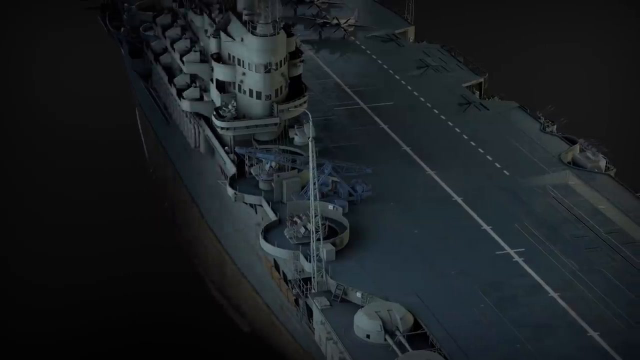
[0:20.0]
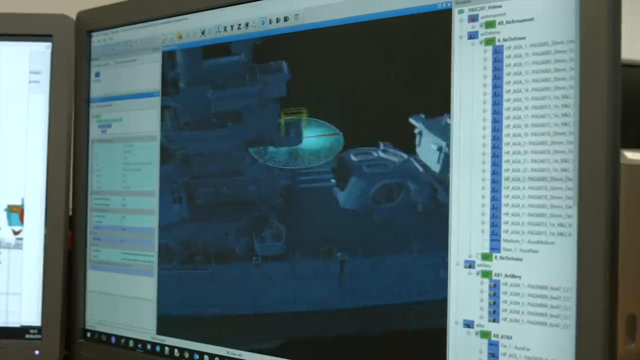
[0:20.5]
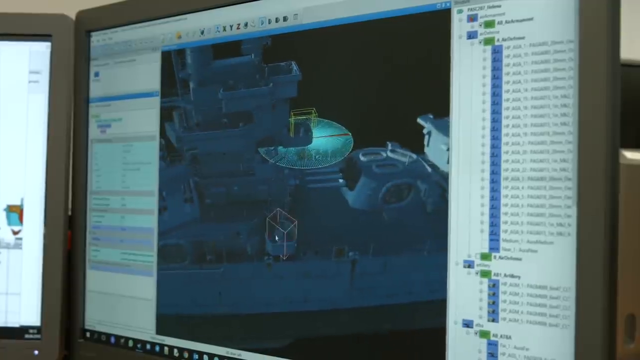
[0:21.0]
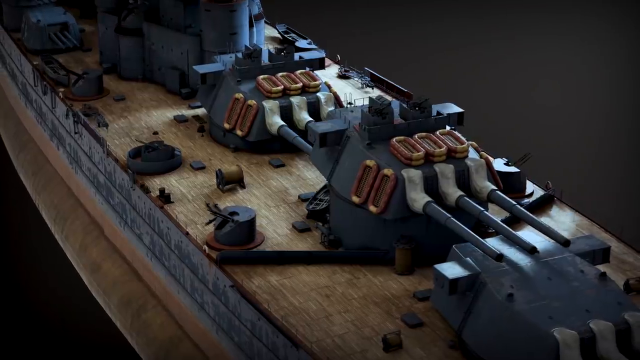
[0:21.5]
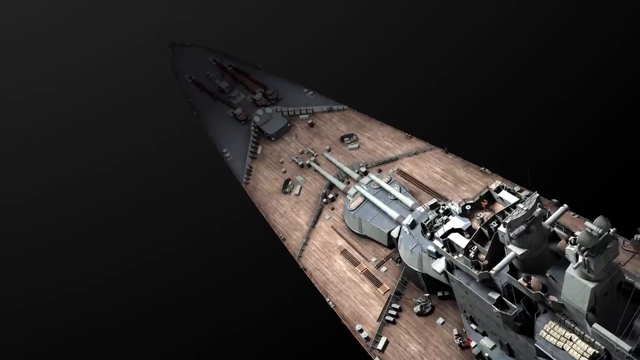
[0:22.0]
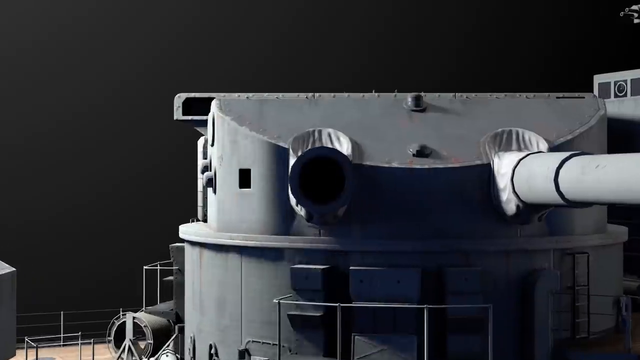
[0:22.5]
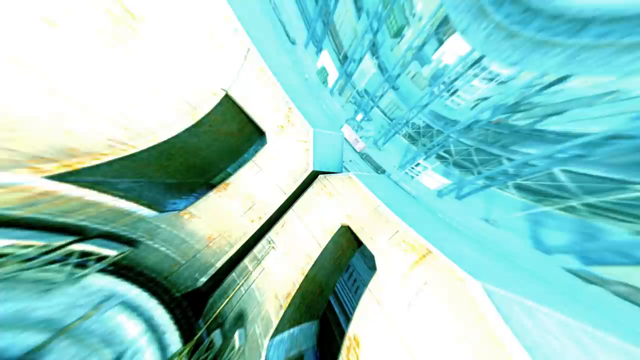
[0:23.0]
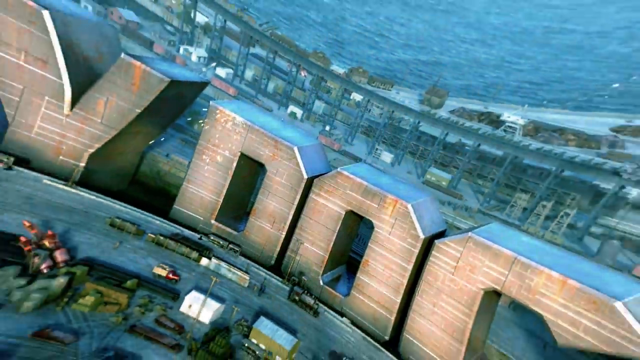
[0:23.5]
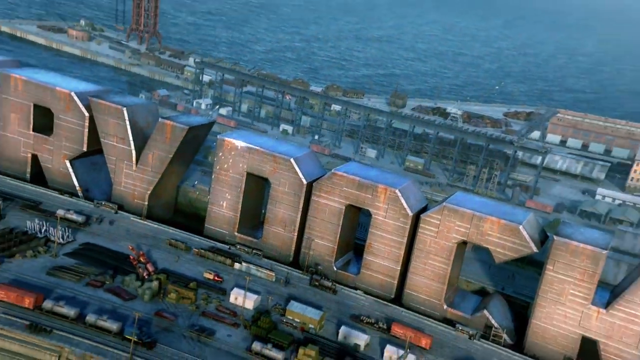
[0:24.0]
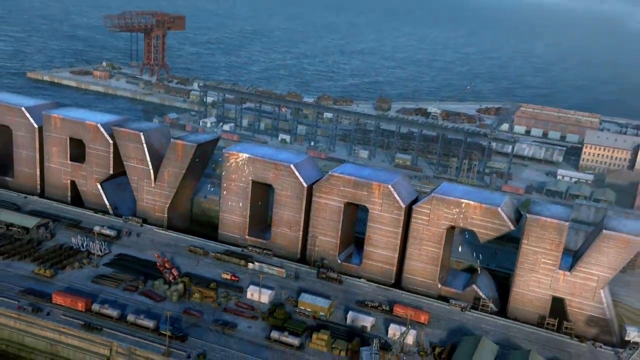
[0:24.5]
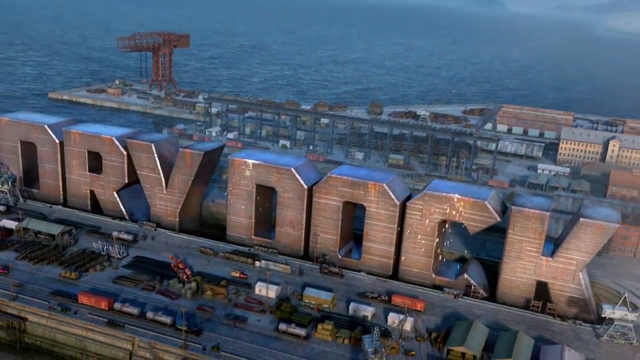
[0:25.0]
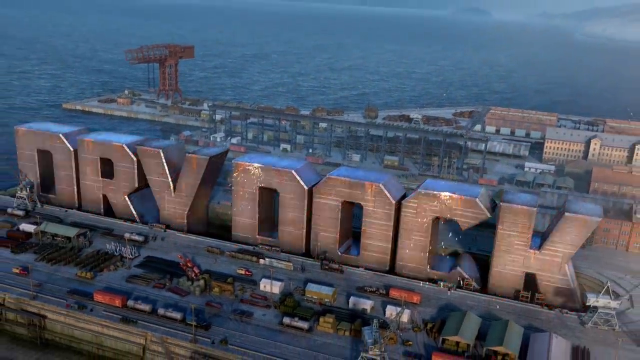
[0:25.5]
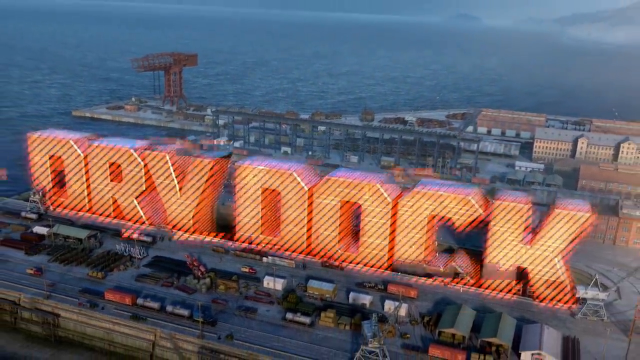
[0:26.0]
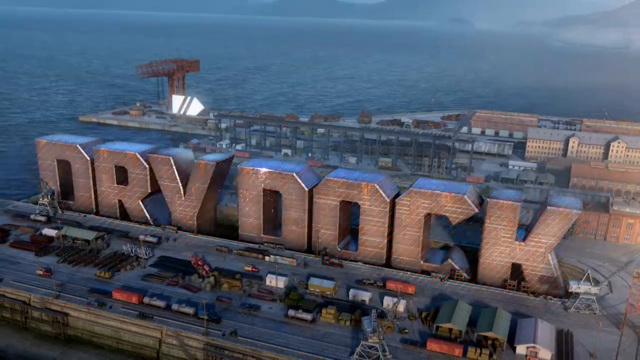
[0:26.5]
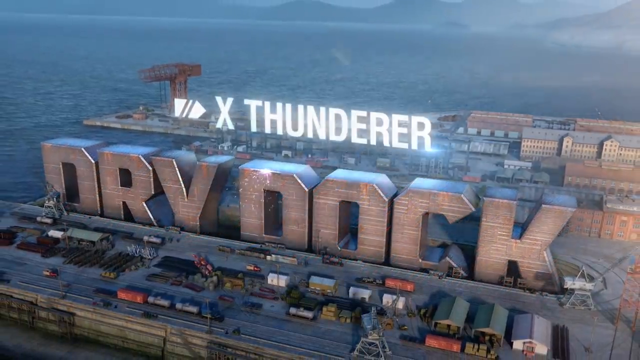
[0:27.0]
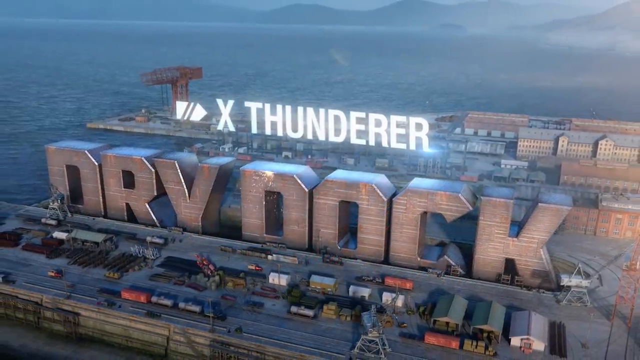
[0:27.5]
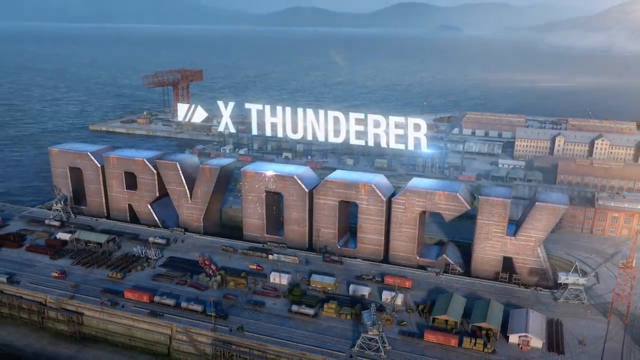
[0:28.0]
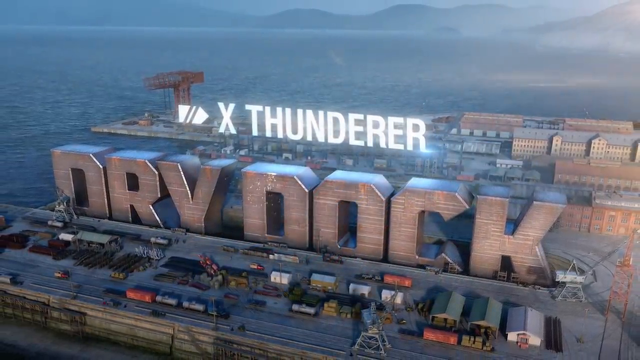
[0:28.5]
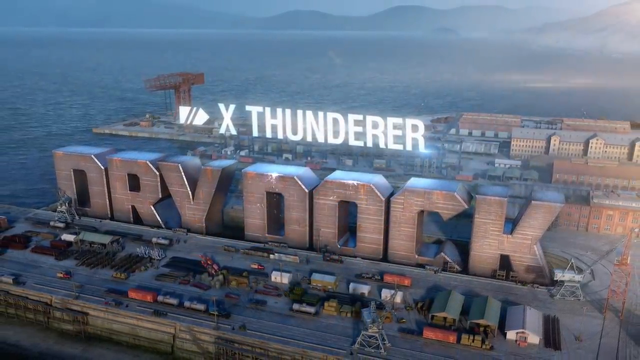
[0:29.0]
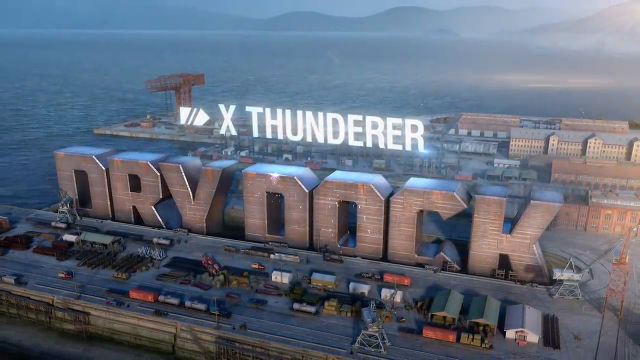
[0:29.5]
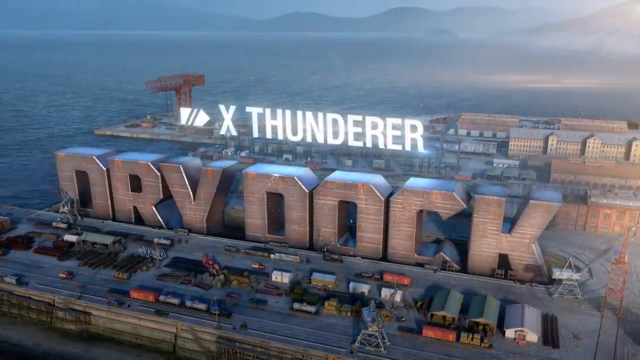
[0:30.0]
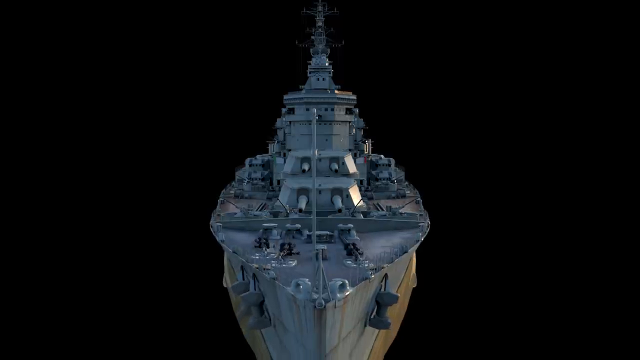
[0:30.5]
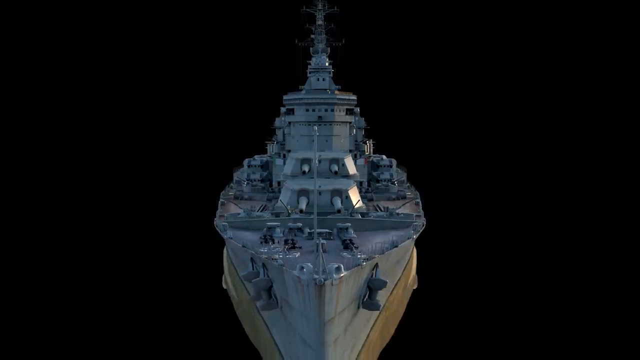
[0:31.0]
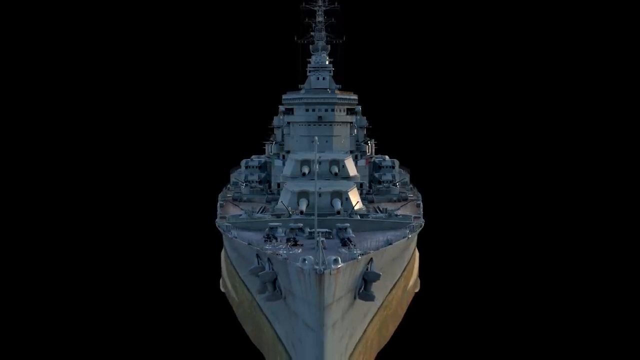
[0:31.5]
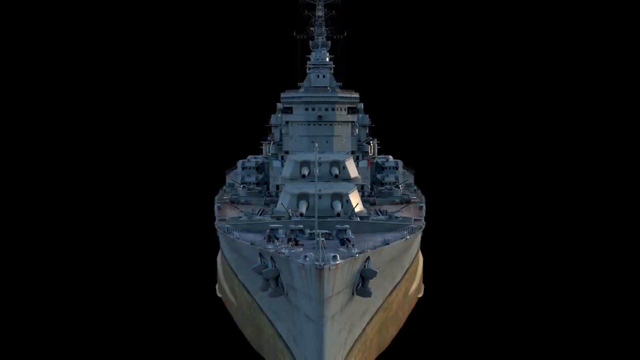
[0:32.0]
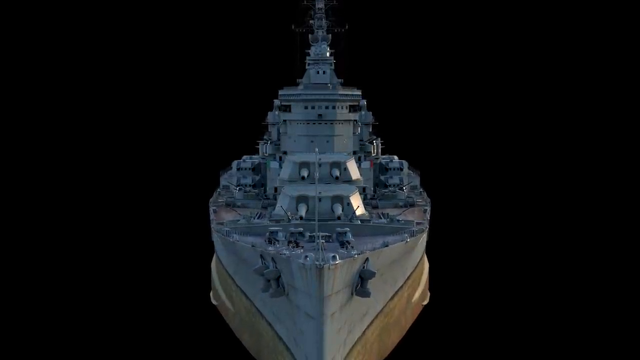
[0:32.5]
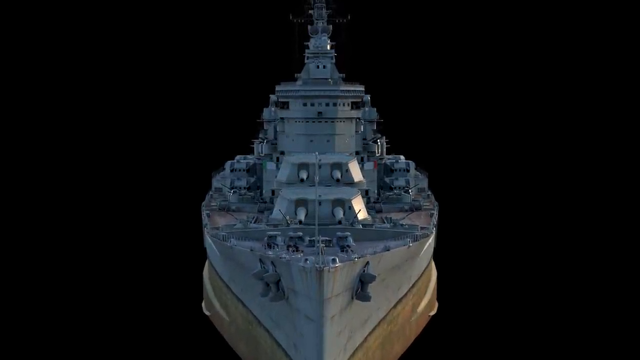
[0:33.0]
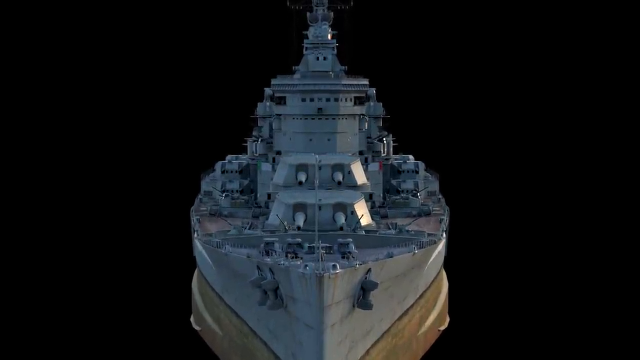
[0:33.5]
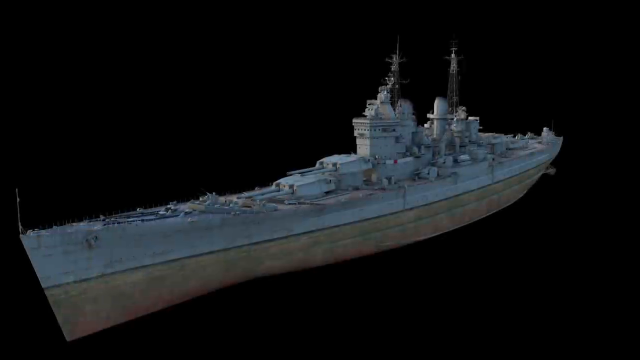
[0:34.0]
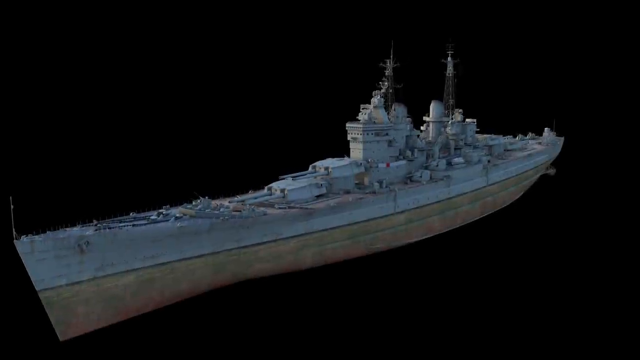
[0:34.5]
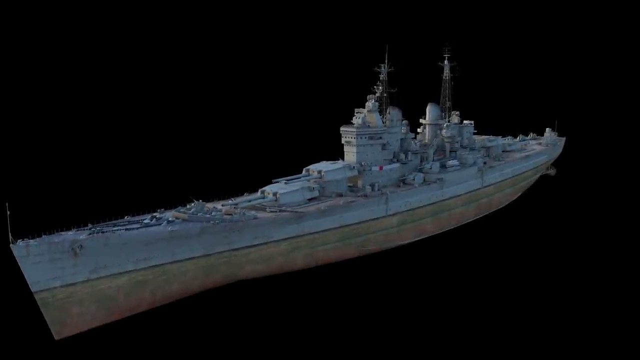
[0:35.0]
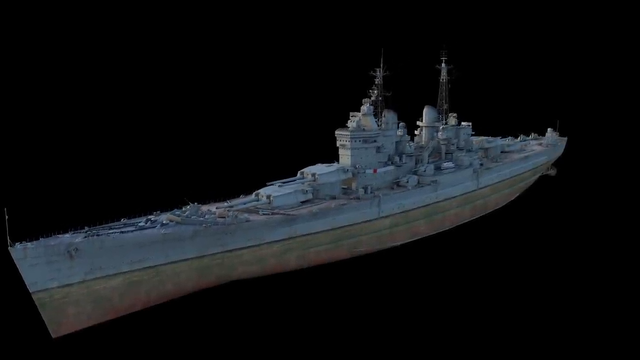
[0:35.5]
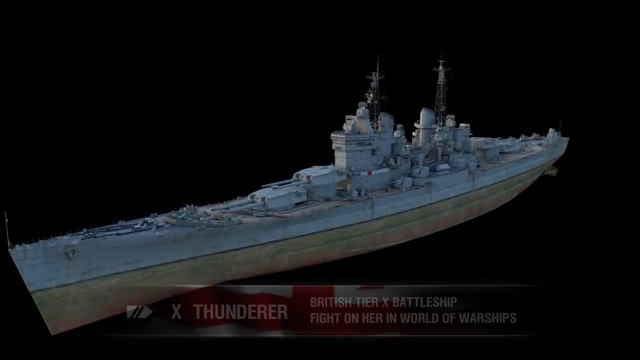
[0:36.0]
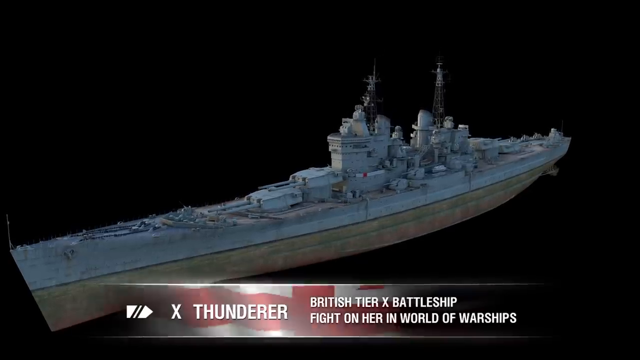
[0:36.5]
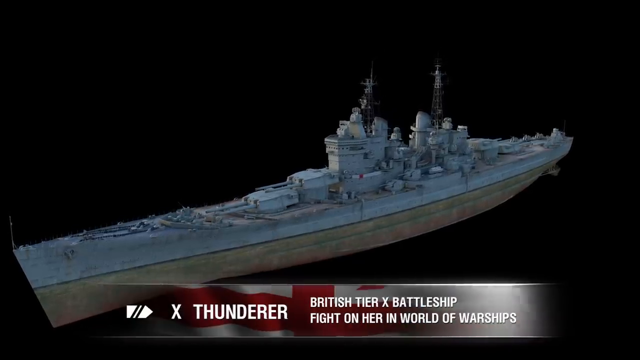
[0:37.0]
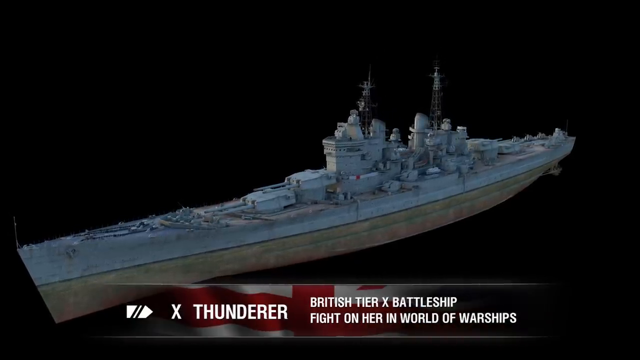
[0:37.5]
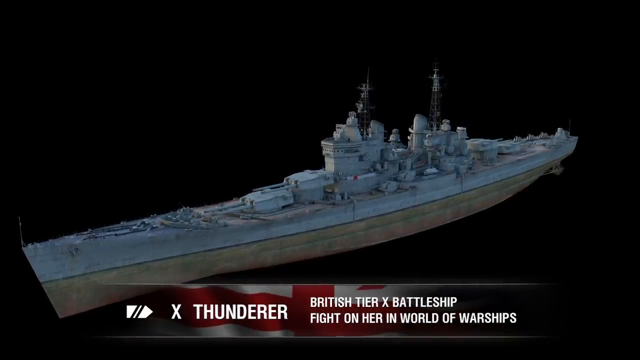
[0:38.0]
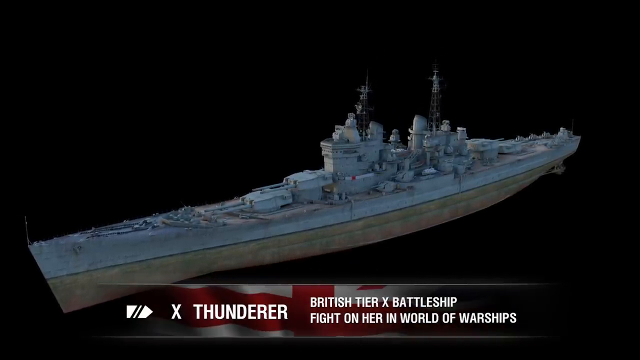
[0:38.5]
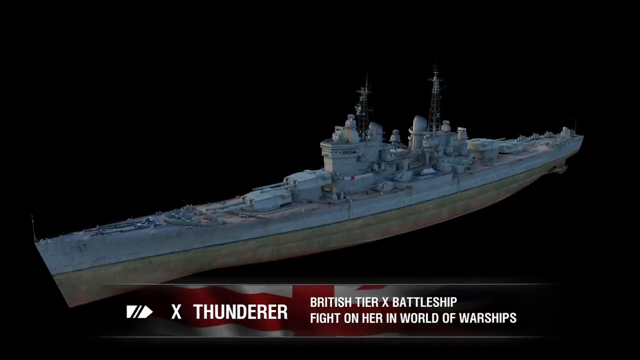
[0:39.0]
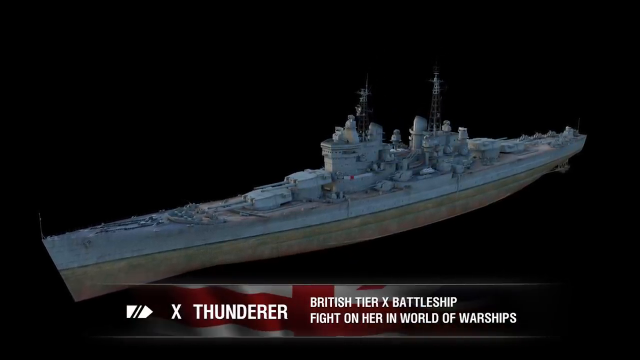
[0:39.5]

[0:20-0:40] A series of AI renderings shows a warship from different angles and under different lighting. The background is black and the rendering looks very clay-like. The footage then changes to what looks like the introduction of a possible TV show or an explanation of the ship by a company or organization called X-Thunderer. A banner at the bottom carries the words "Fight on her in world of warships", with a British flag behind the words. Text states that the ship is a "British tier X battleship". Against the black background of the AI rendering, the words "Dry Rock" appear on what looks like a pier on the ocean. The words glow red for a moment with gridlines in them; they are angled down and centered, running from left to right. Dry Rock is possibly created by X-Thunderer.